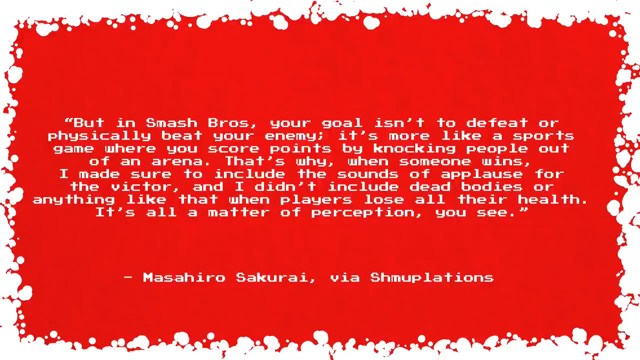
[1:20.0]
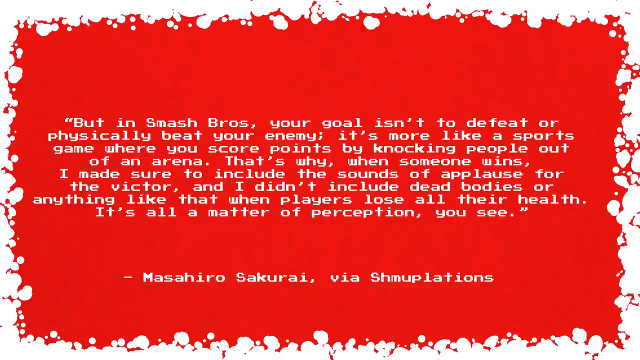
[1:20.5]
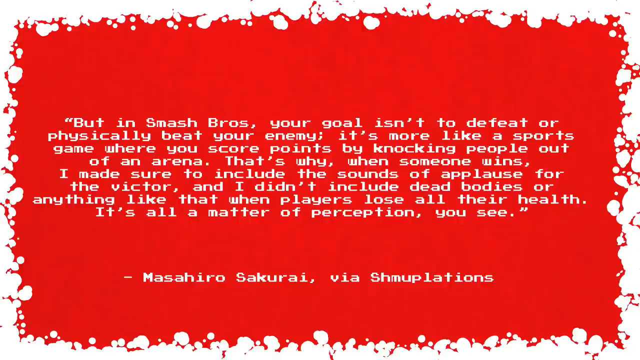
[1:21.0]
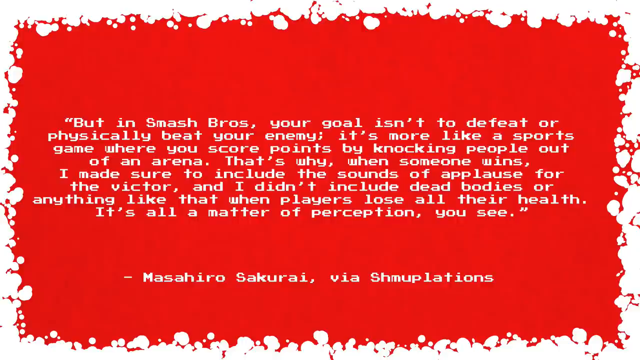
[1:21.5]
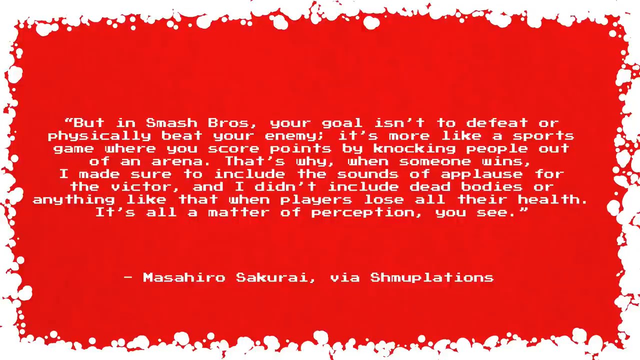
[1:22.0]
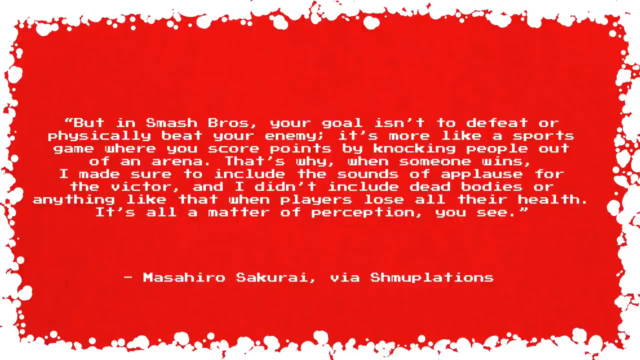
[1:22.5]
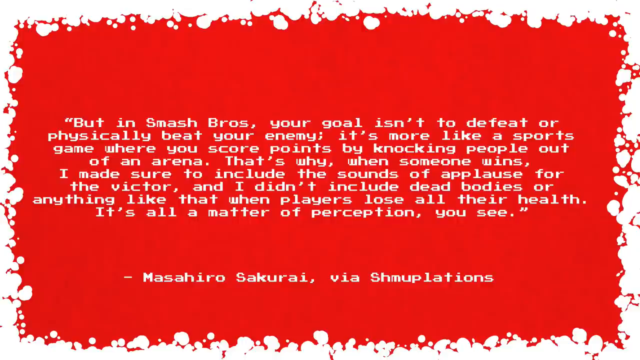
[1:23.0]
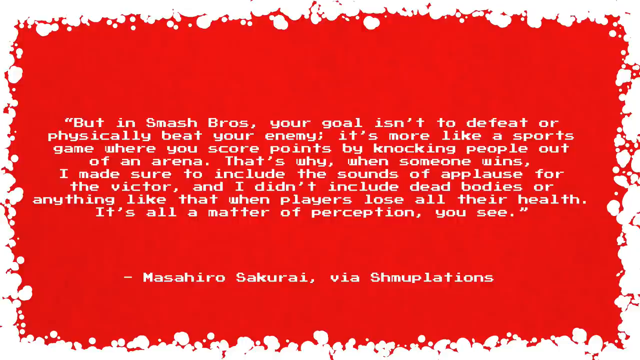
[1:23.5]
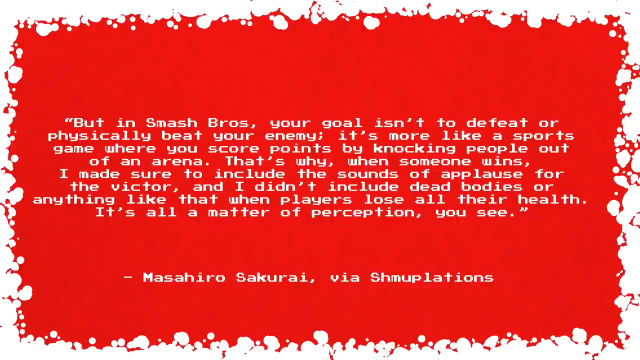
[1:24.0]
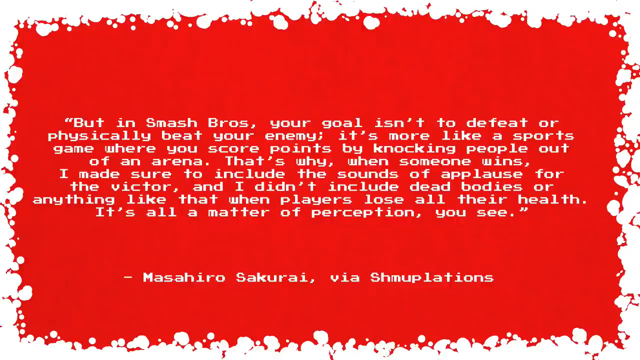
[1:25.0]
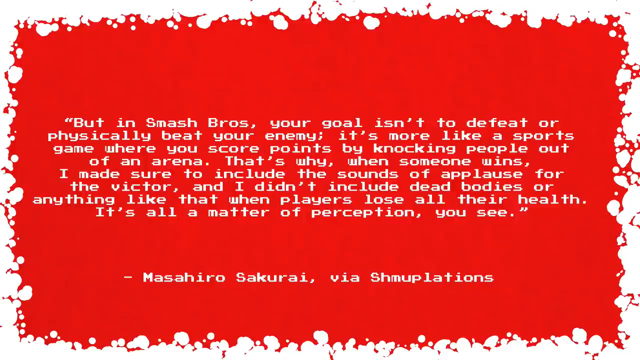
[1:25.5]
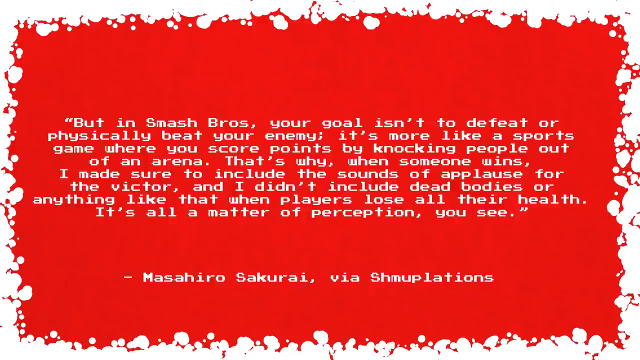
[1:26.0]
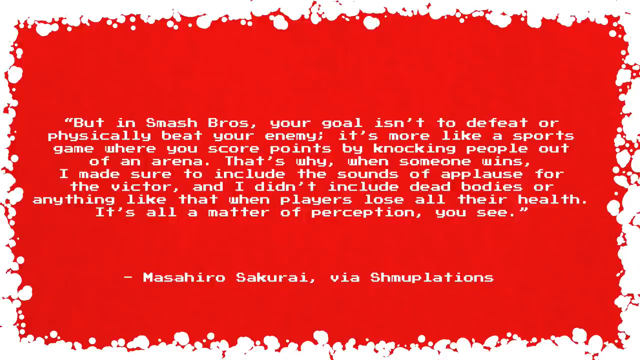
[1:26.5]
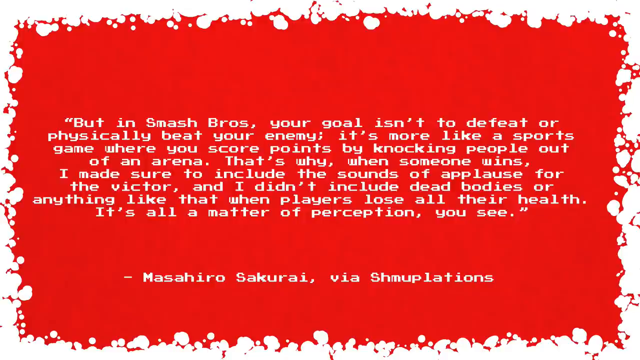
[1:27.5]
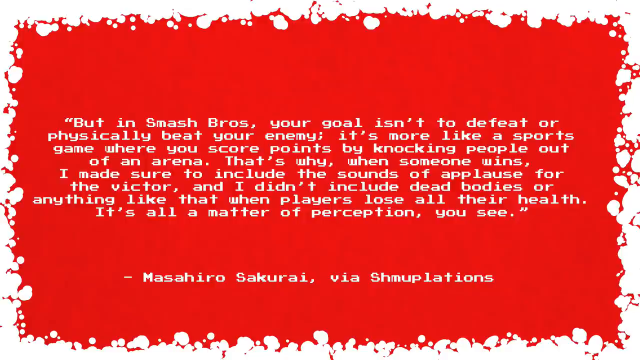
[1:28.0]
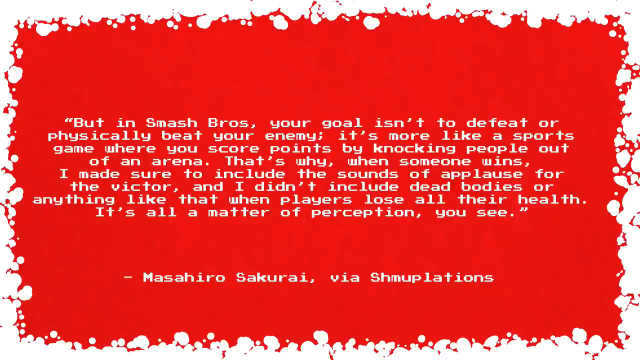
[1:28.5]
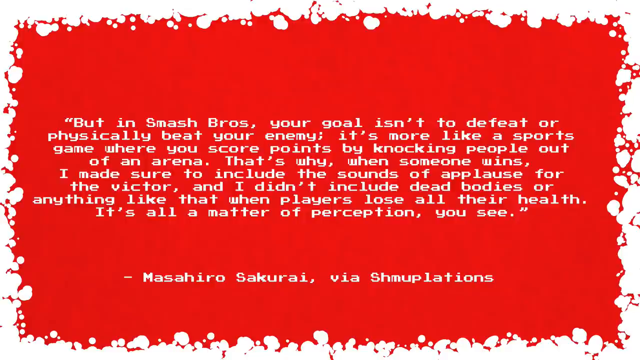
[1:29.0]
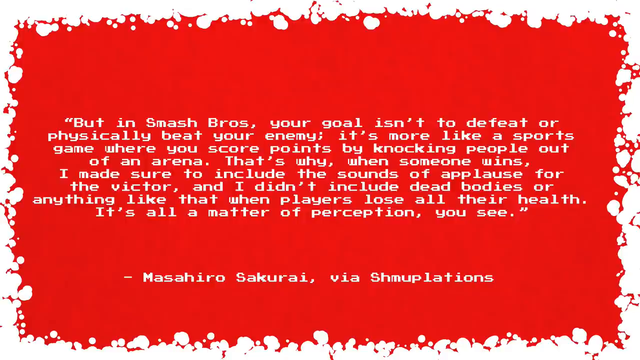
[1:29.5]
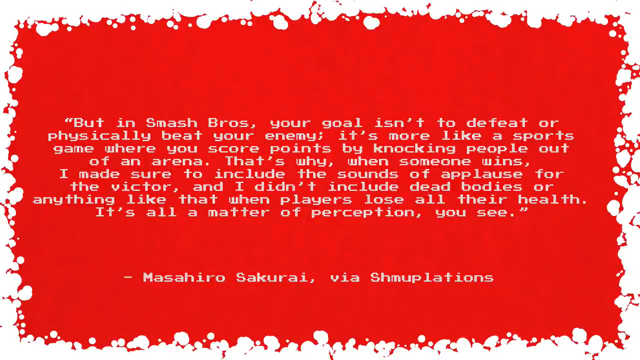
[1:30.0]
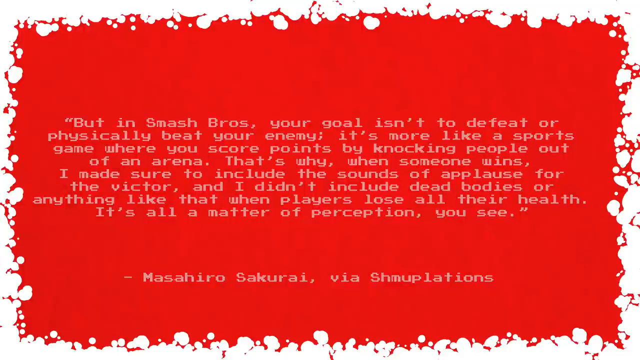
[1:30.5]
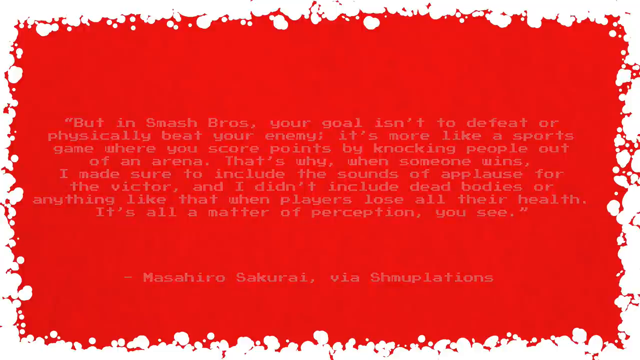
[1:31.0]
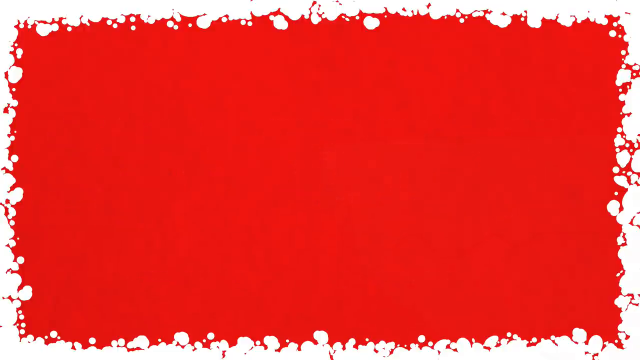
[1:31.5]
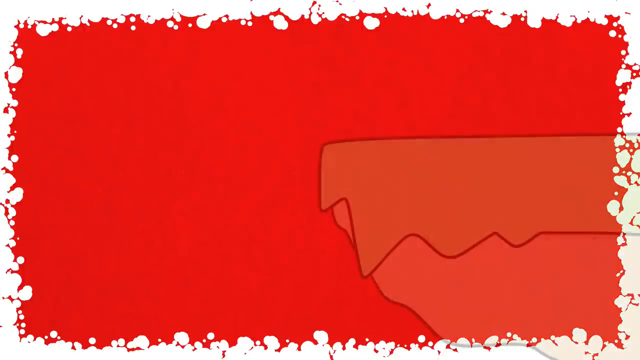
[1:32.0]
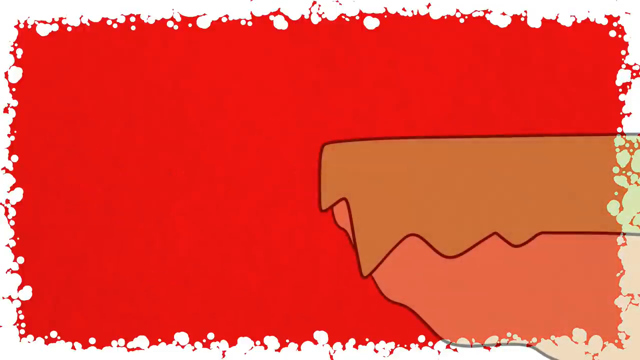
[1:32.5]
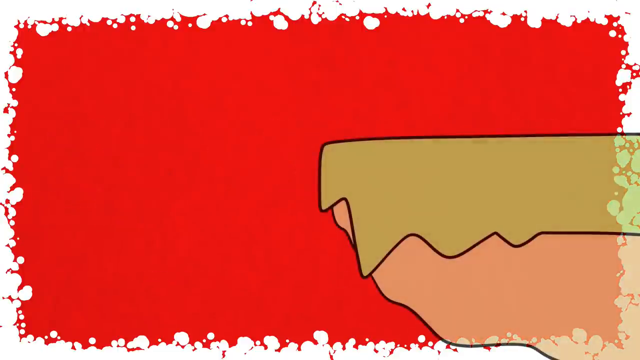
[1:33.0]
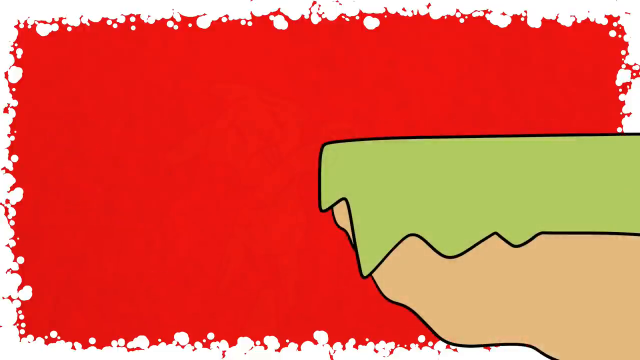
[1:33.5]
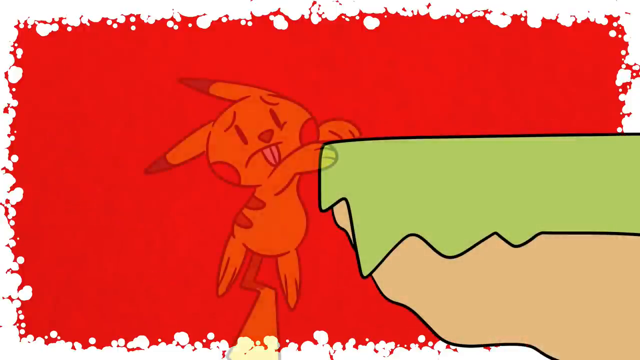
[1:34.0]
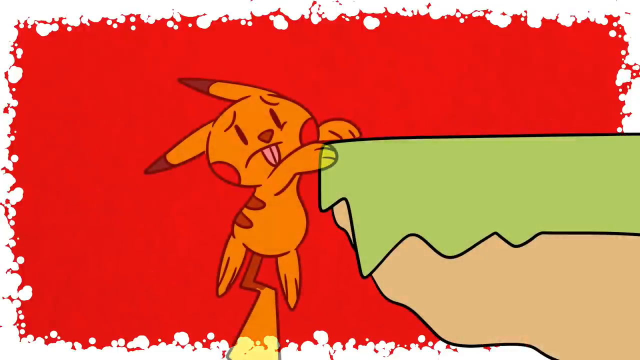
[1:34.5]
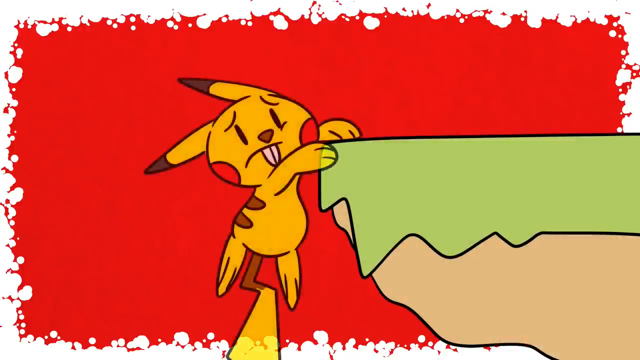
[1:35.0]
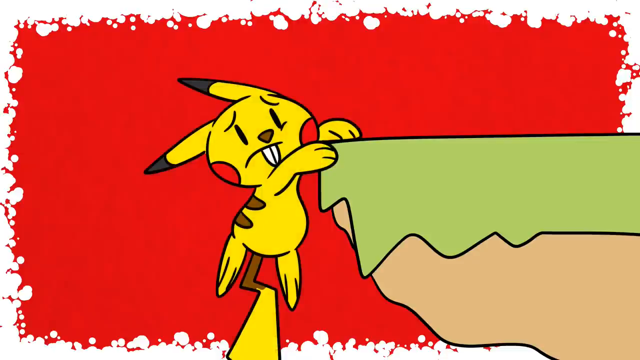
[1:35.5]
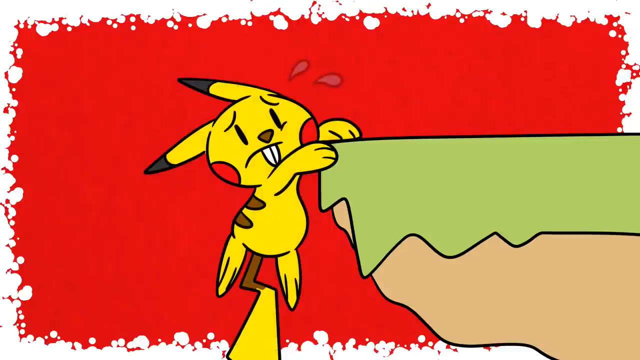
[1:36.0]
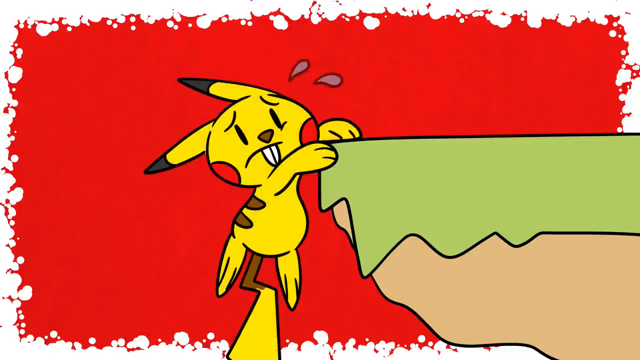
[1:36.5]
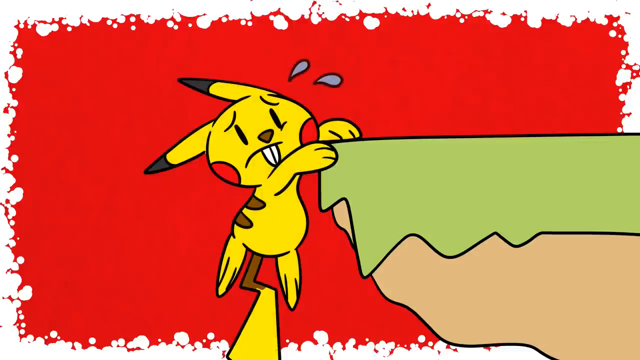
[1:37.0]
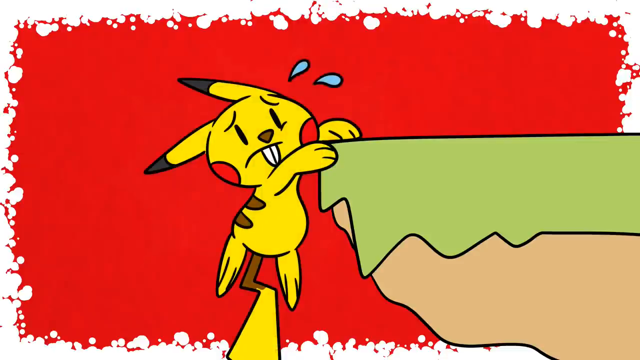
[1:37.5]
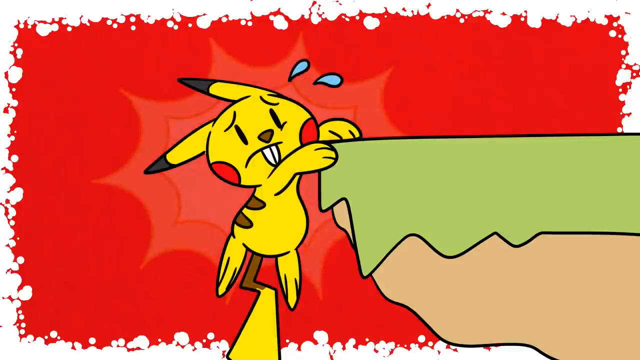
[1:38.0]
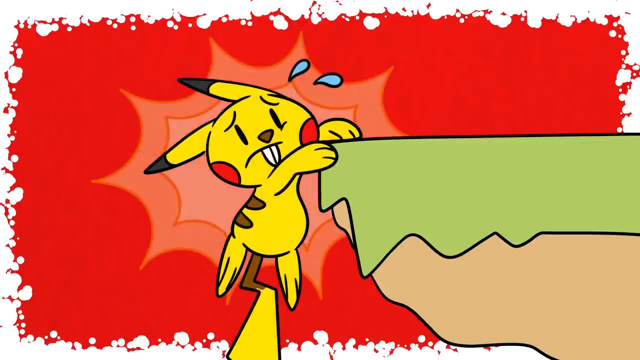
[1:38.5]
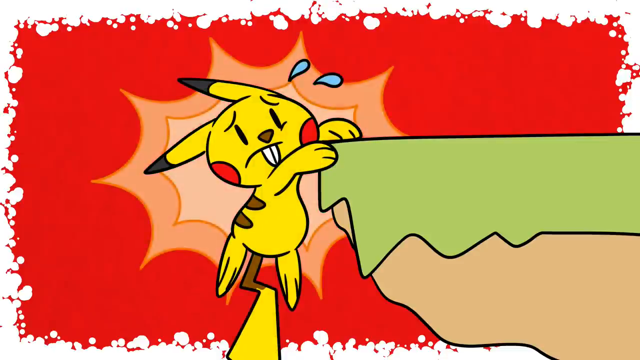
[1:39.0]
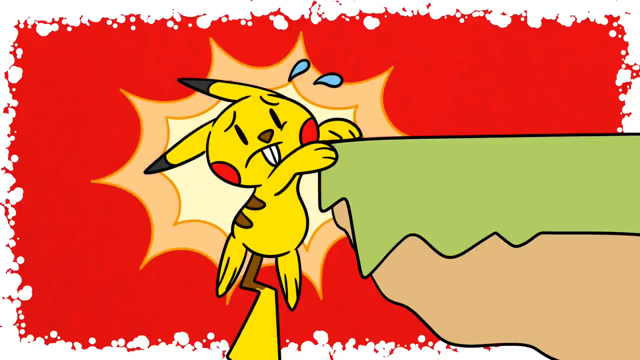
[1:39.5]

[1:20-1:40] The screen still shows a red picture with white text in the middle and white text at the bottom, its edges kind of like burnt or almost like blood marks, with no other motion. The text then fades out, a ledge forms, and a Pikachu appears, desperately holding onto the edge, with lightning forming up behind him. This Pikachu is yellow with black outlines, black-tipped ears and red circles on his cheeks. He kind of almost looks like a beaver in character design because he has really big teeth. He has a brown nose and brown stripes on his body, and his tail is like a little lightning bolt with a bit of brown on it as well. He kind of has paws for hands and is holding onto a green cliff ledge, with a little bit of dirt and sand beneath it. The red background remains.